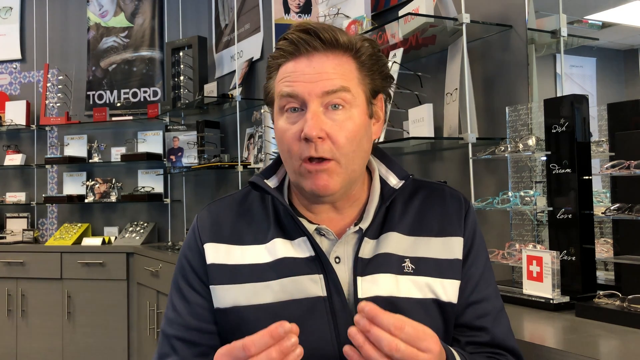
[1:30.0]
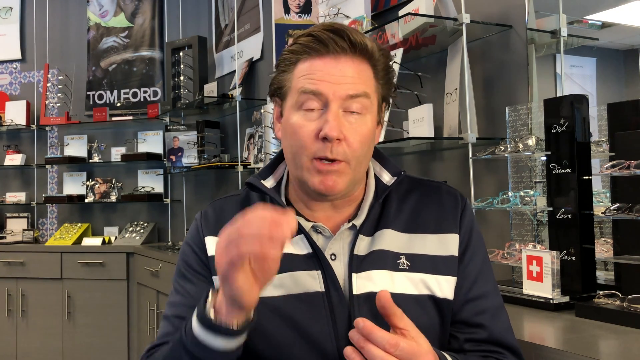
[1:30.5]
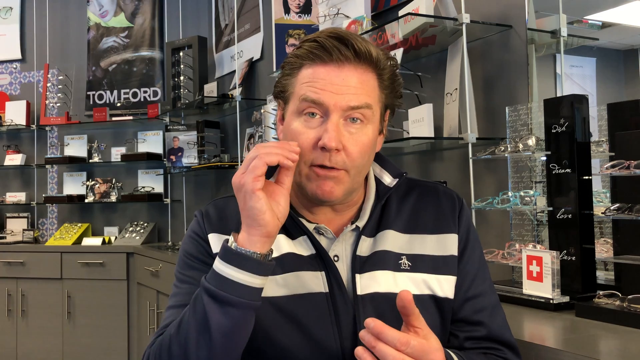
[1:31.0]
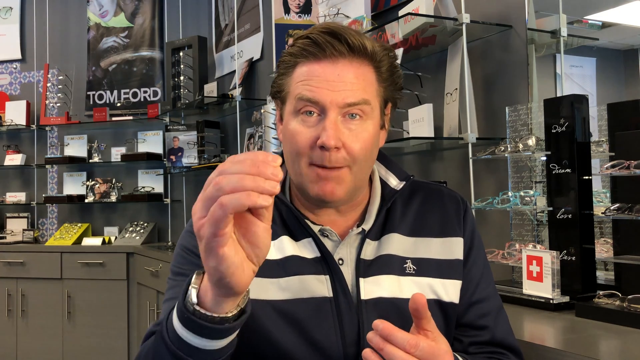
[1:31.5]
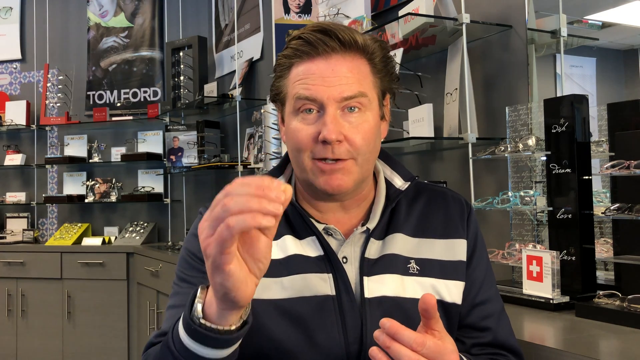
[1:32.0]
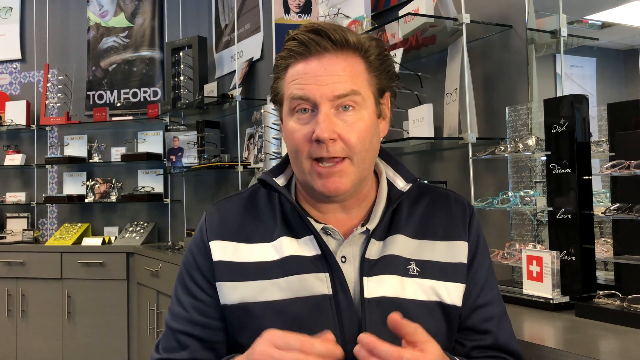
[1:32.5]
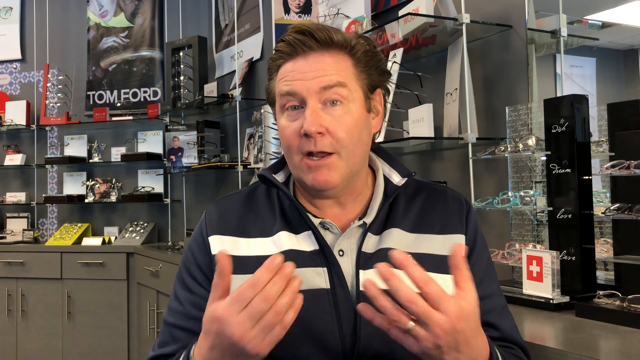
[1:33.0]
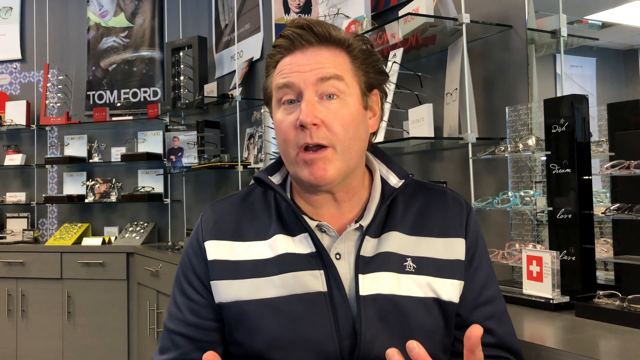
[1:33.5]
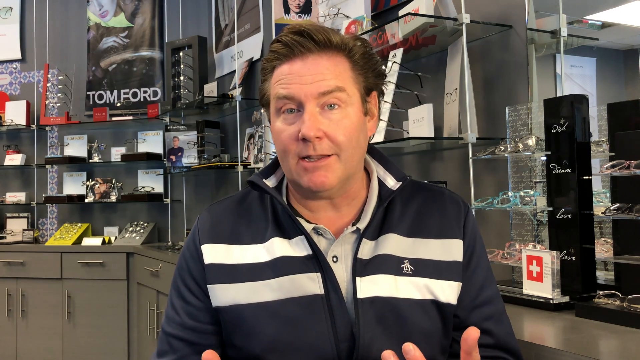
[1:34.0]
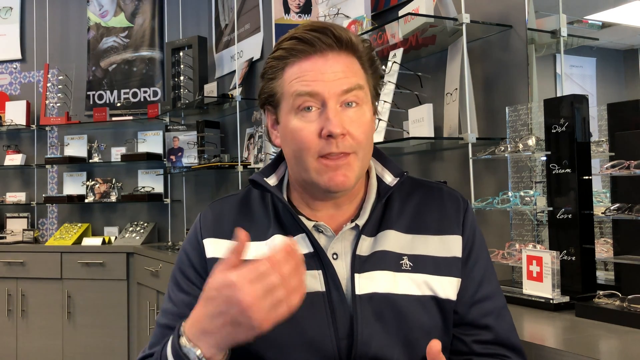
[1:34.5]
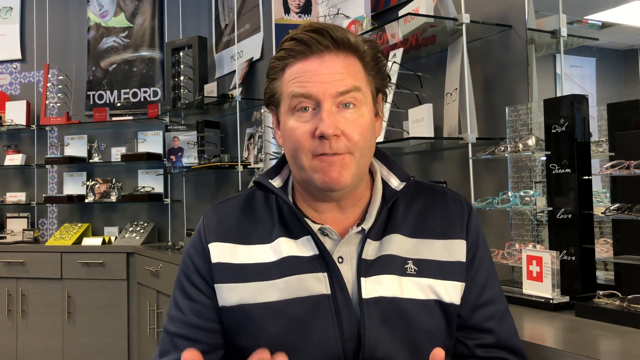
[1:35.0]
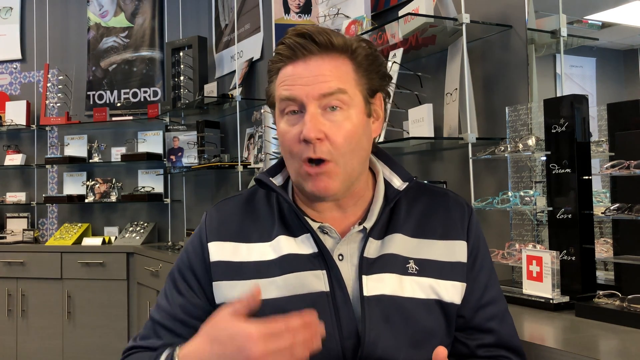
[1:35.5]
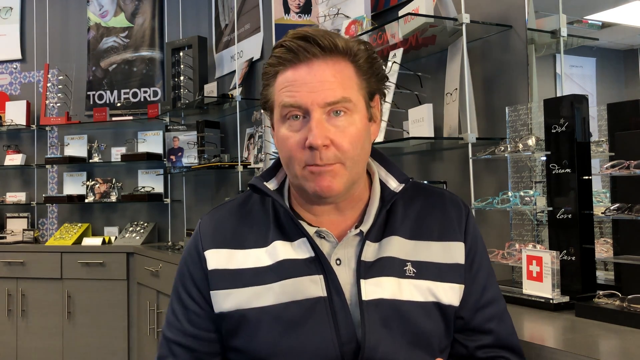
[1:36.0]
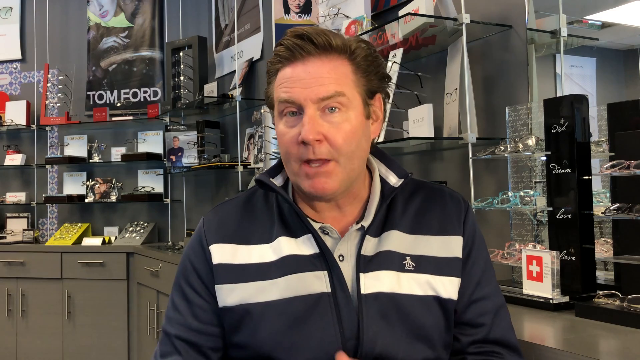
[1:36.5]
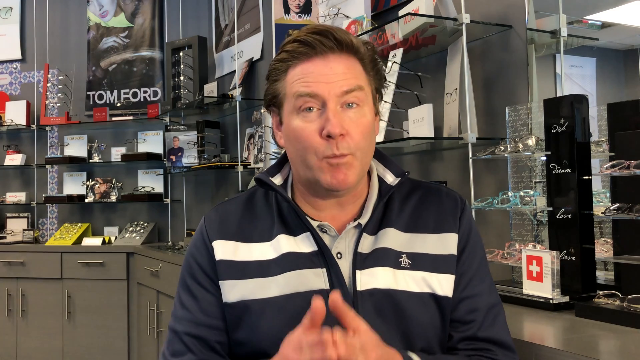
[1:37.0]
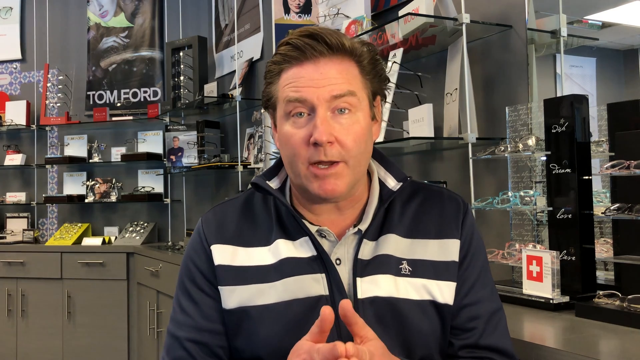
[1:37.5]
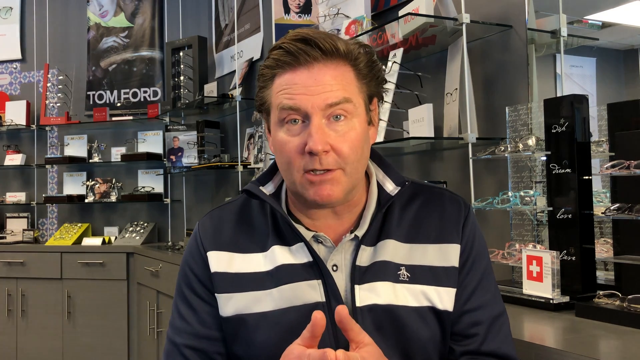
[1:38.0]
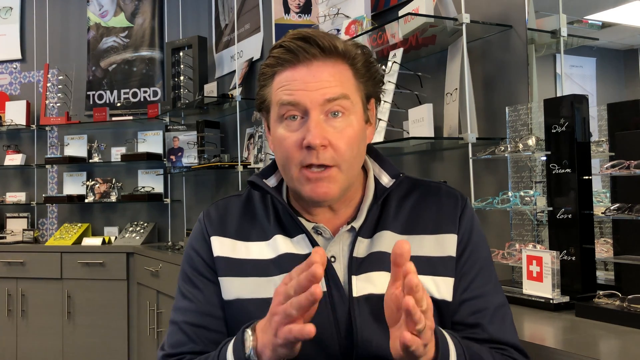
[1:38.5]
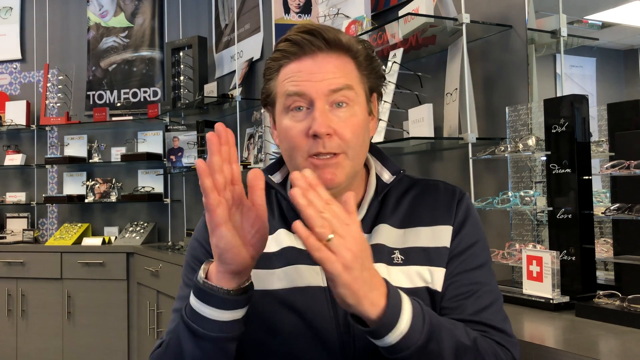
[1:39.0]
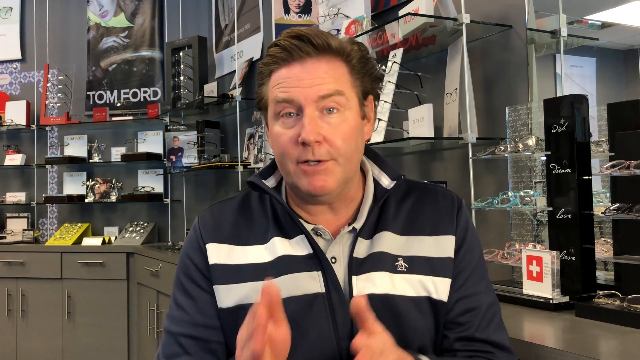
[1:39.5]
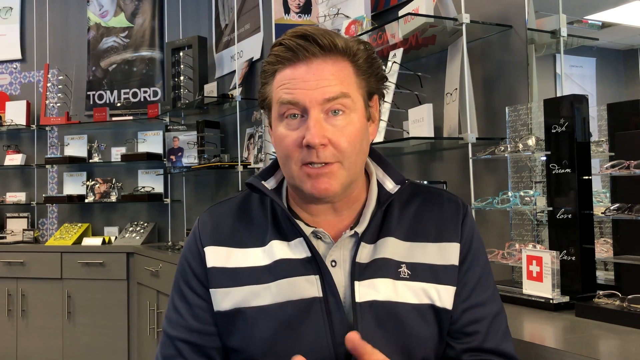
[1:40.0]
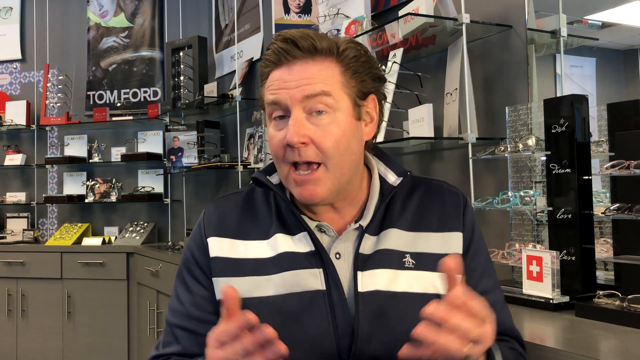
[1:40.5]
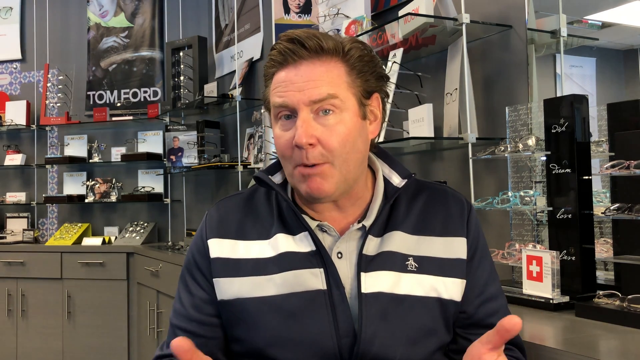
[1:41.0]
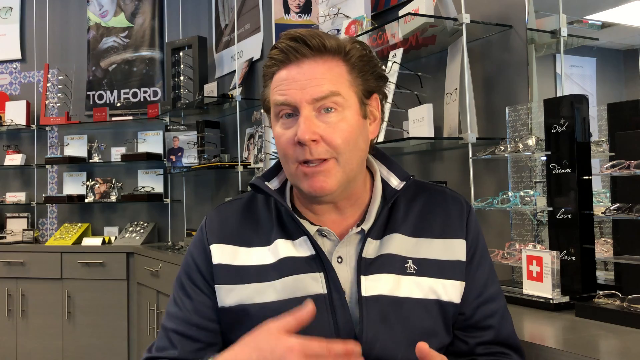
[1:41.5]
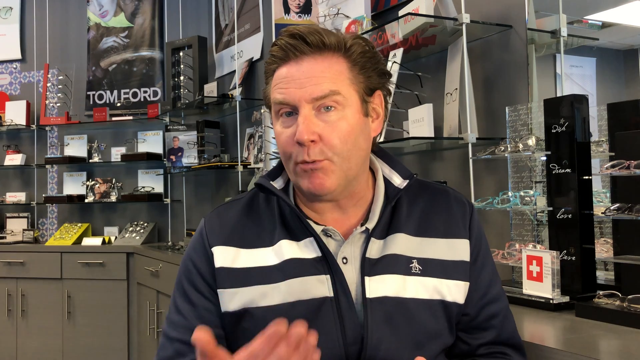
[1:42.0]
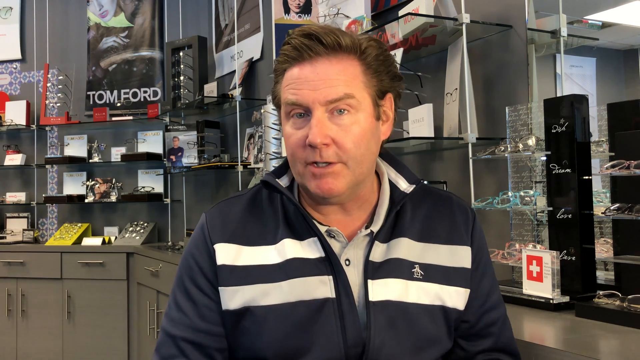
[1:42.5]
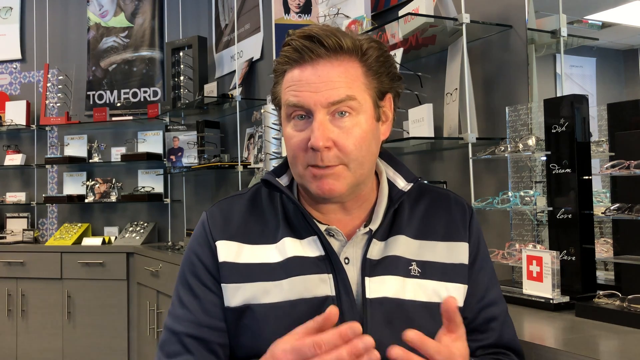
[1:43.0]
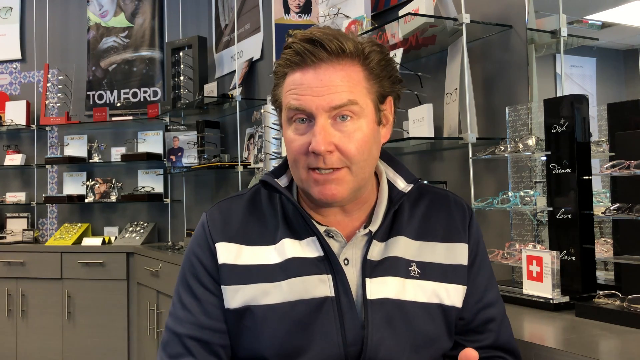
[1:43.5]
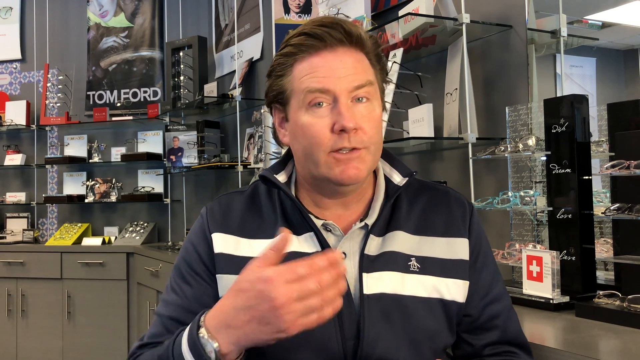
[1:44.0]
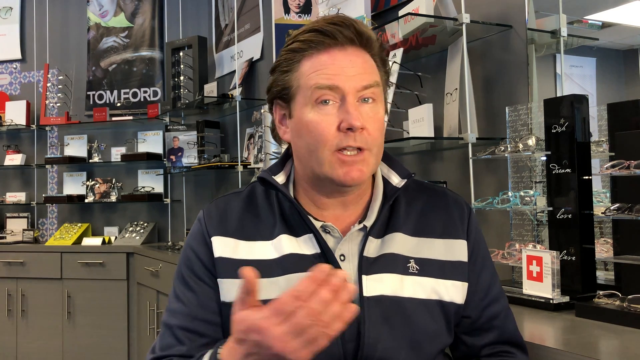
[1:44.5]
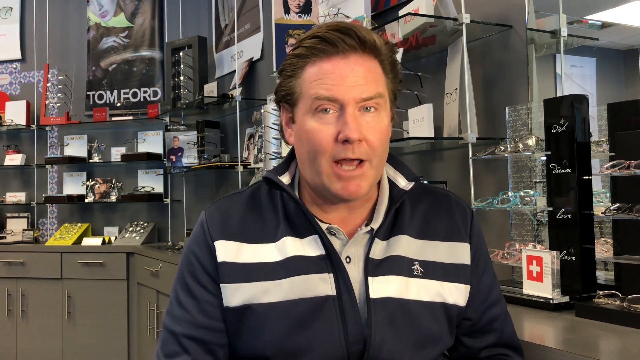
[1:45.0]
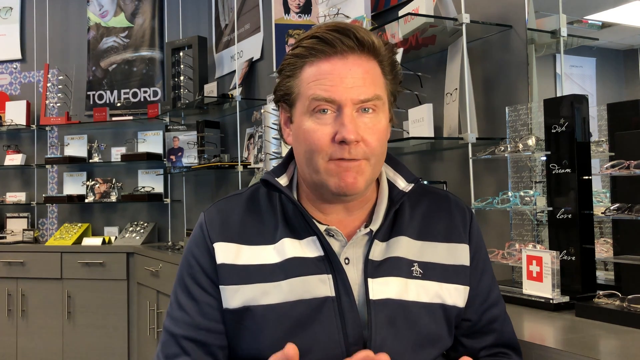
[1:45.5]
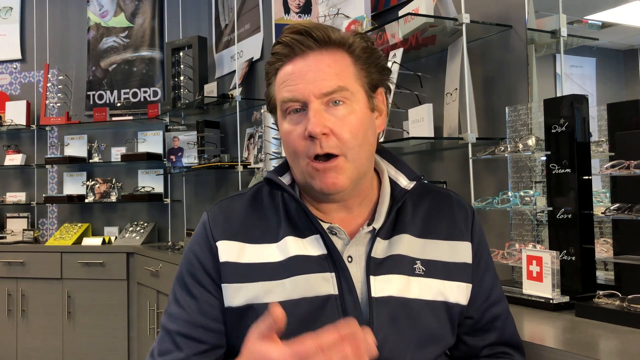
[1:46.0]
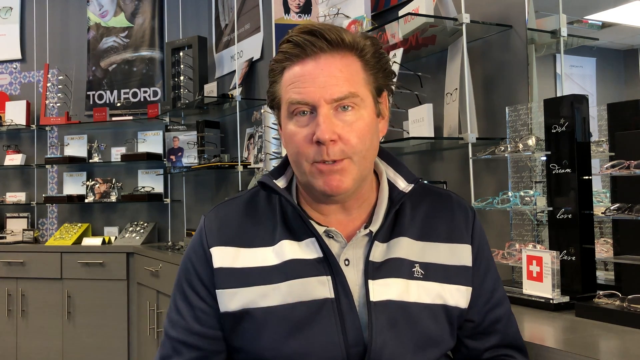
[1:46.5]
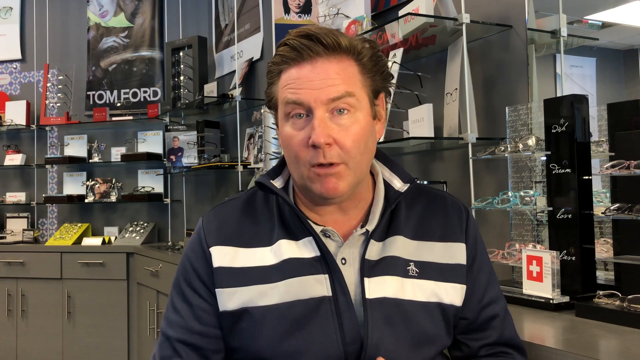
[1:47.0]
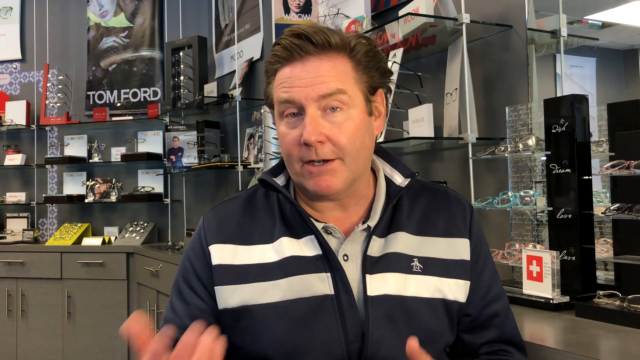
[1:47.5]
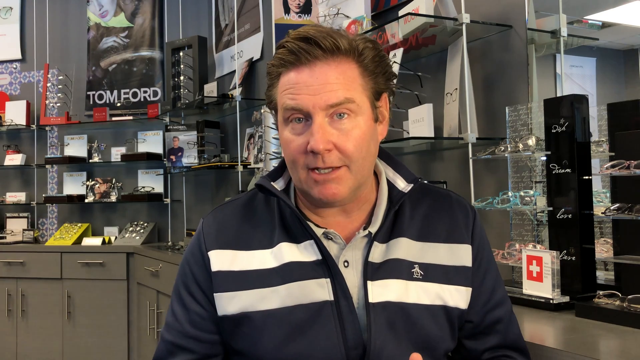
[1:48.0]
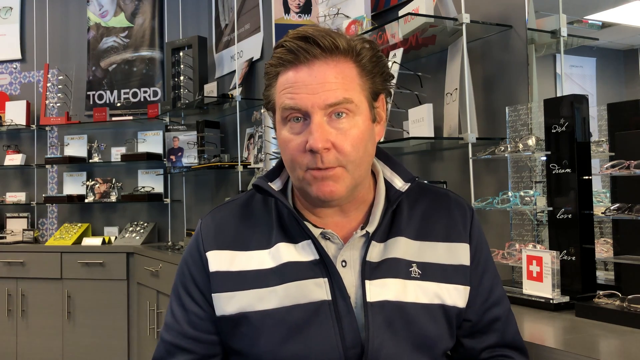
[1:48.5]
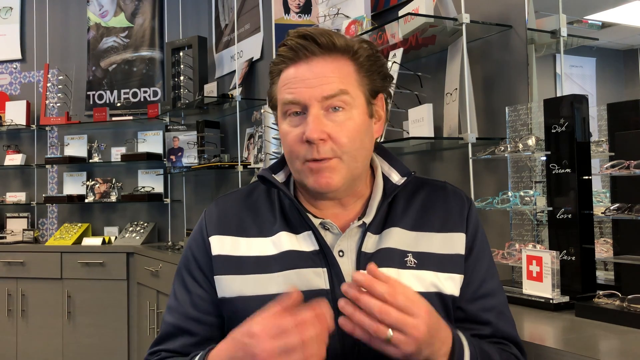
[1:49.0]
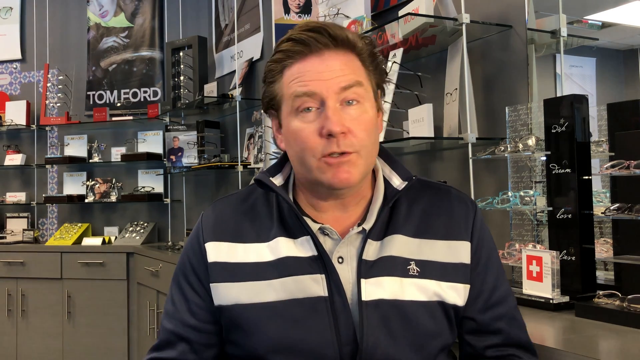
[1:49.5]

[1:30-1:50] The short, brown-haired, somewhat hefty Caucasian man, probably around 30, wears a horizontally striped shirt in a sort of optometry environment. Glasses, contact lenses and other visual aid tools are shown around him. He talks throughout, probably as an optometrist, with no other people or animals, no screen changes and no change of setting.